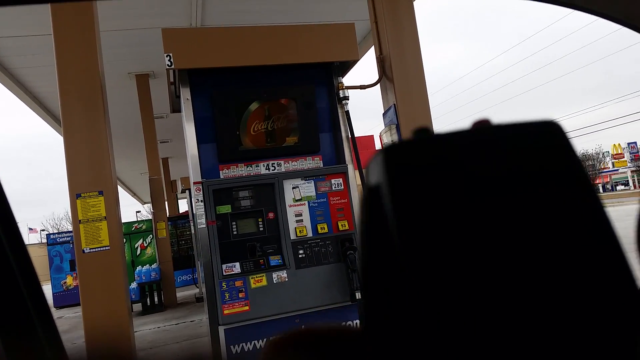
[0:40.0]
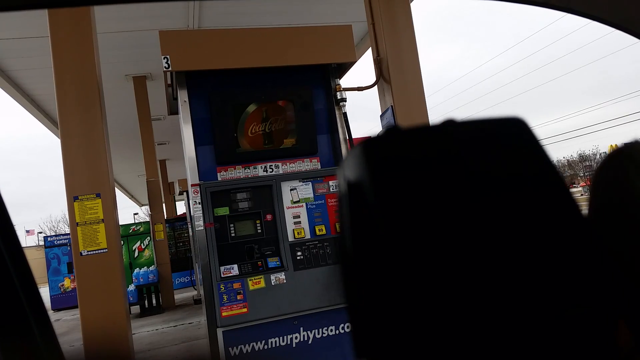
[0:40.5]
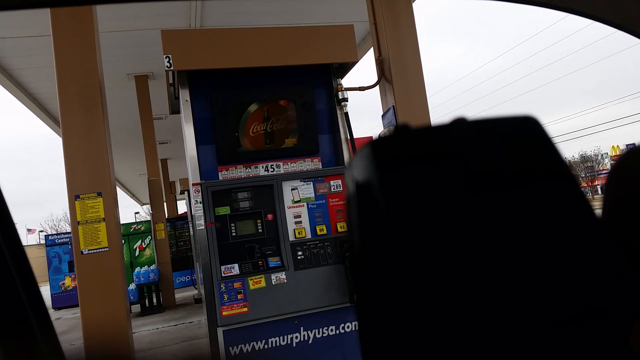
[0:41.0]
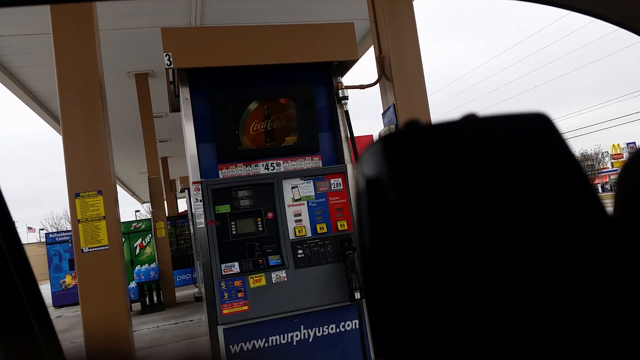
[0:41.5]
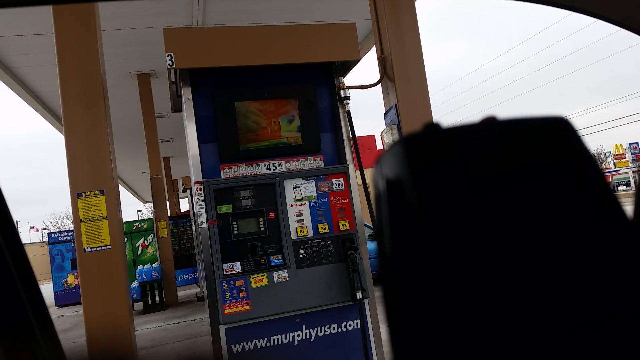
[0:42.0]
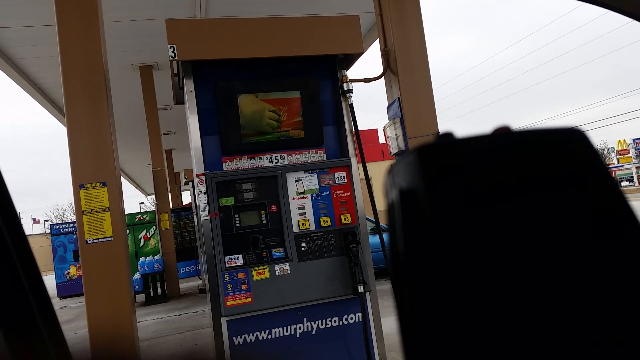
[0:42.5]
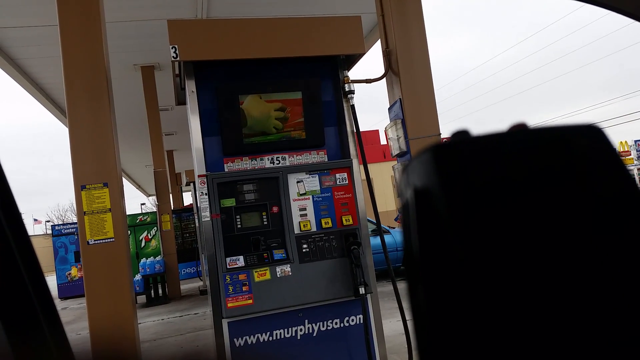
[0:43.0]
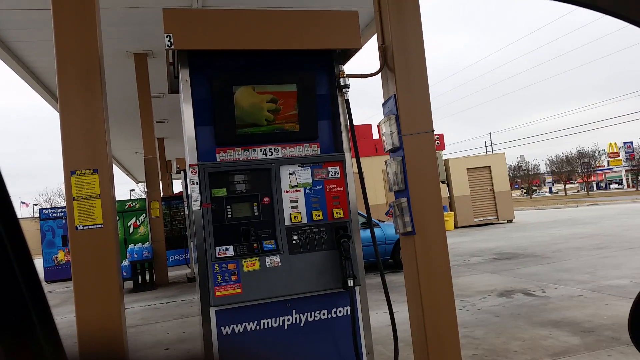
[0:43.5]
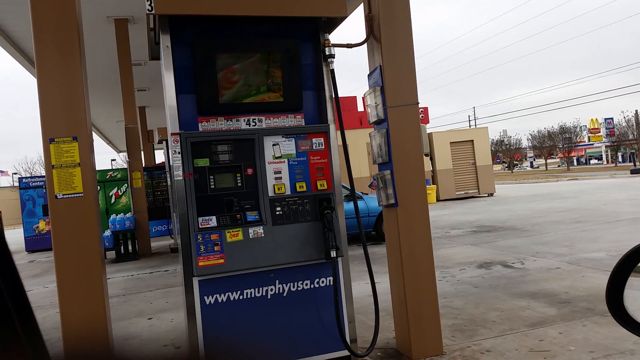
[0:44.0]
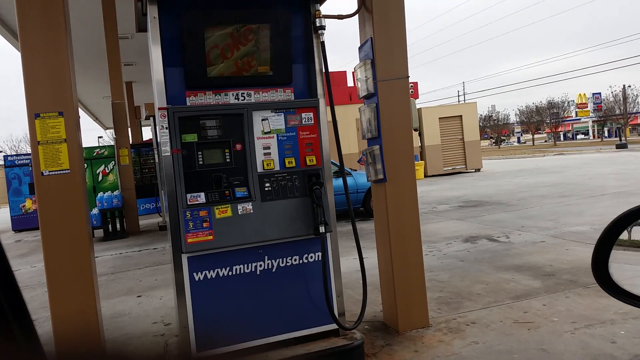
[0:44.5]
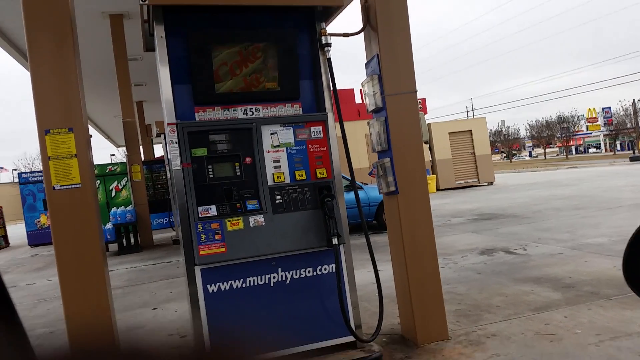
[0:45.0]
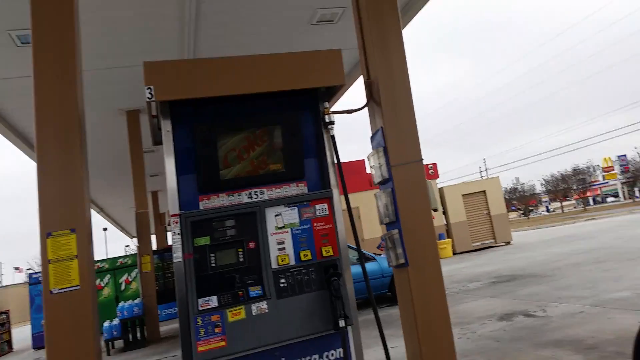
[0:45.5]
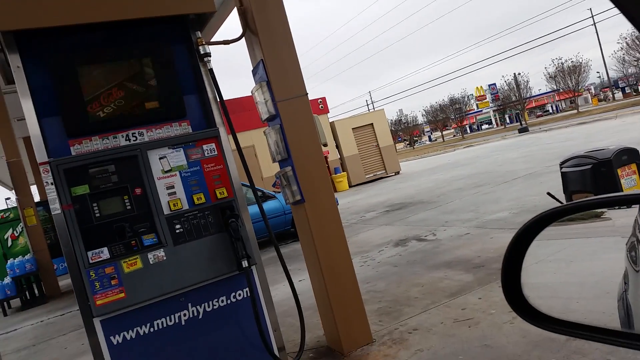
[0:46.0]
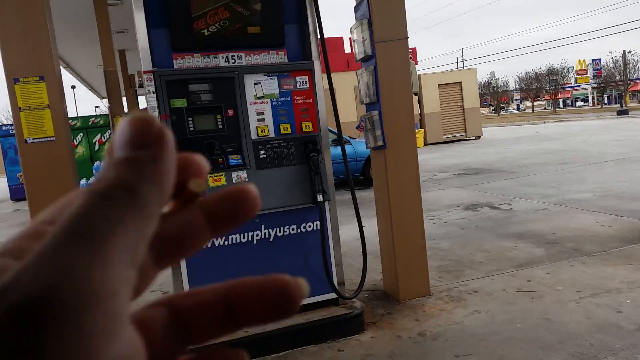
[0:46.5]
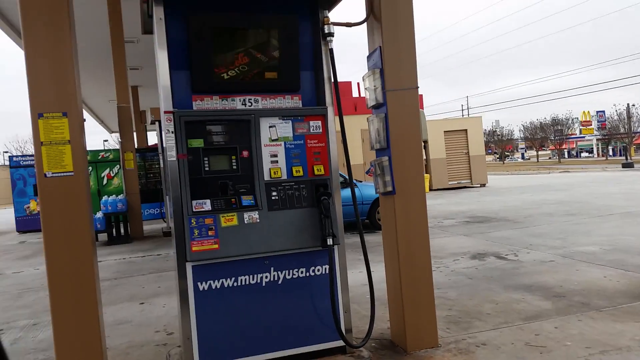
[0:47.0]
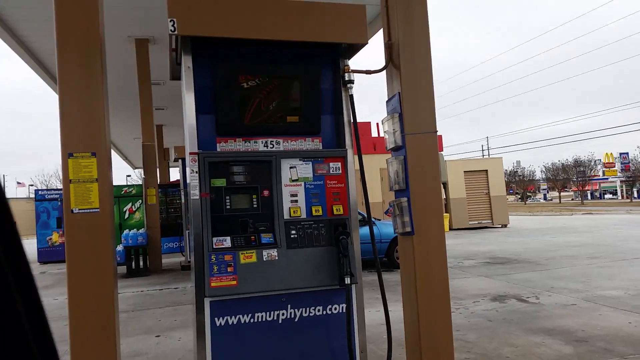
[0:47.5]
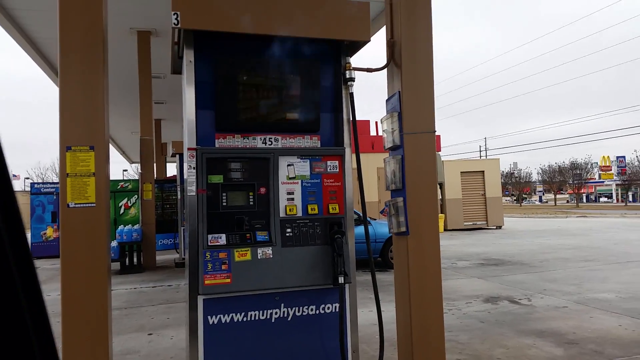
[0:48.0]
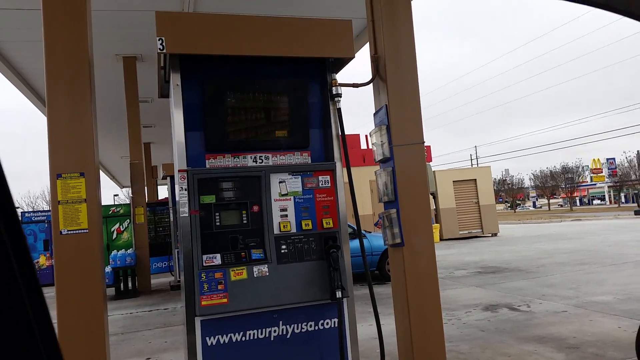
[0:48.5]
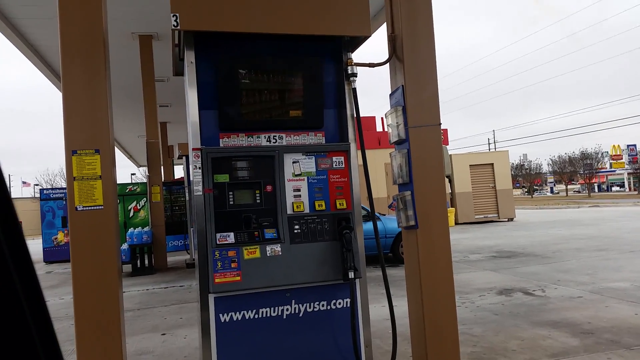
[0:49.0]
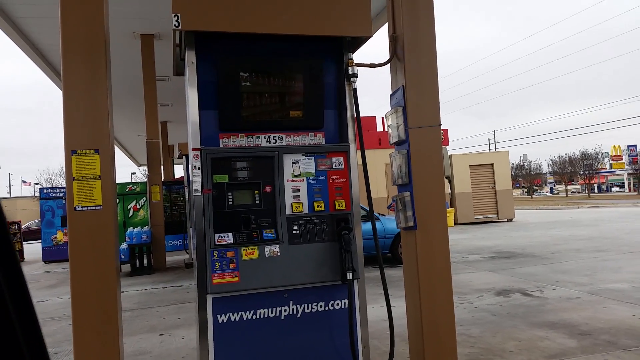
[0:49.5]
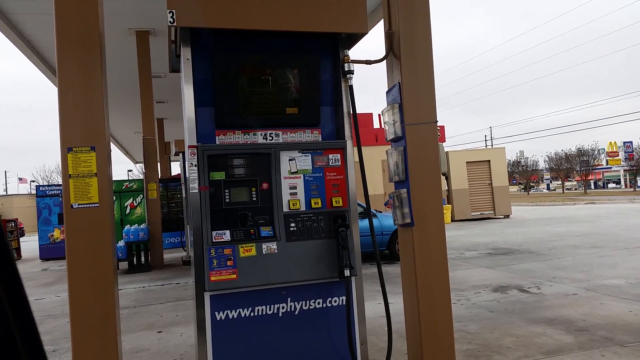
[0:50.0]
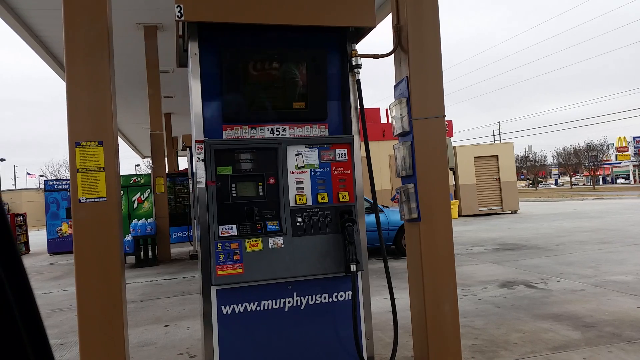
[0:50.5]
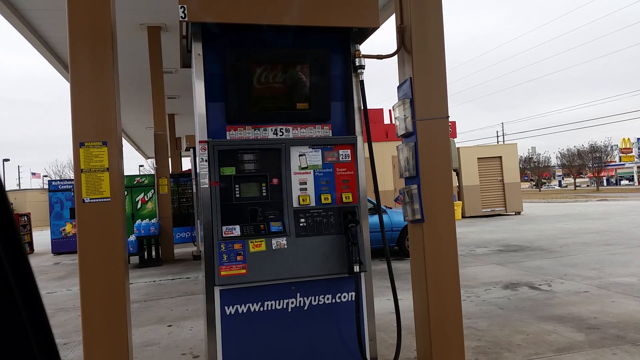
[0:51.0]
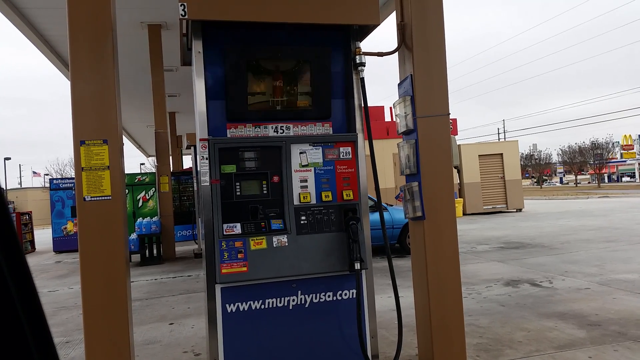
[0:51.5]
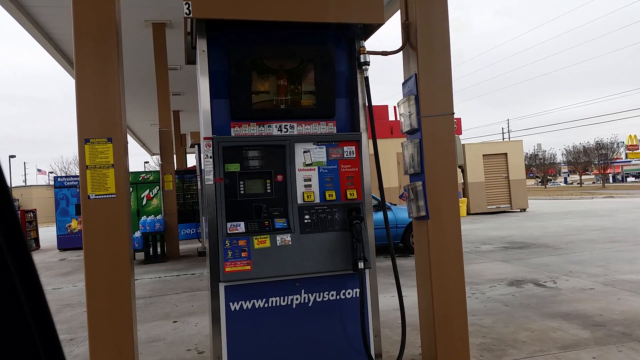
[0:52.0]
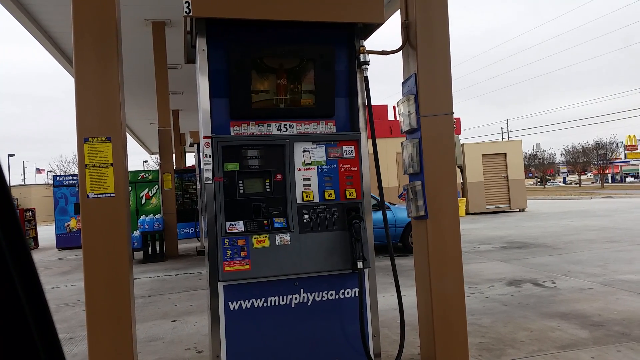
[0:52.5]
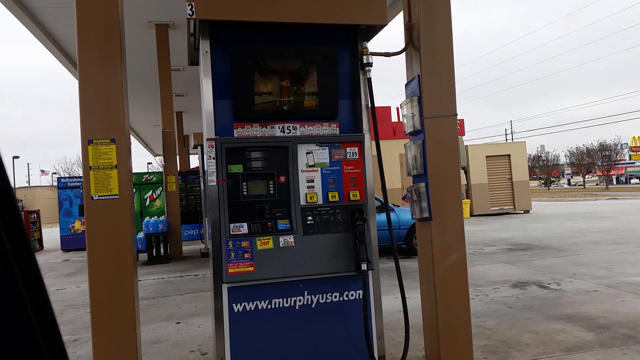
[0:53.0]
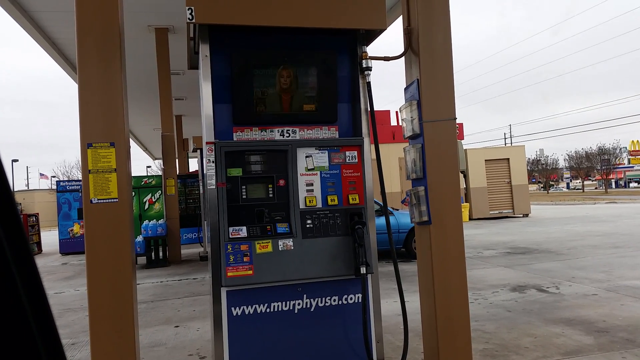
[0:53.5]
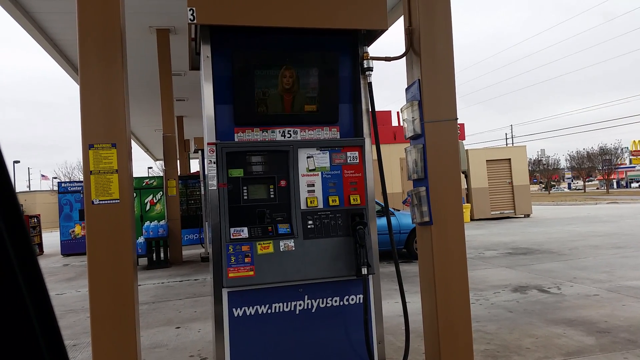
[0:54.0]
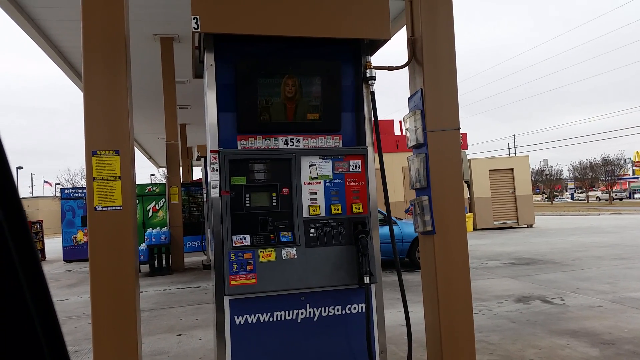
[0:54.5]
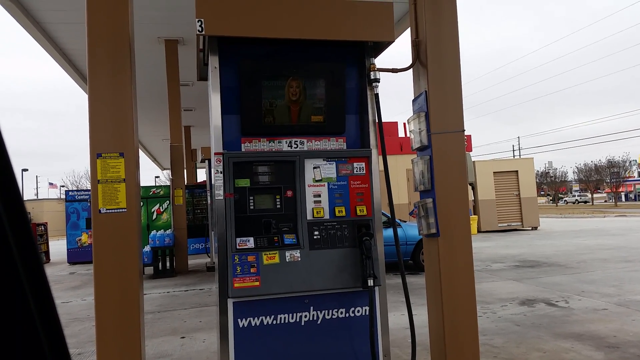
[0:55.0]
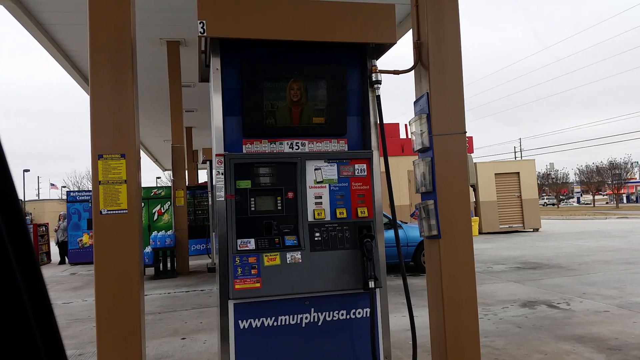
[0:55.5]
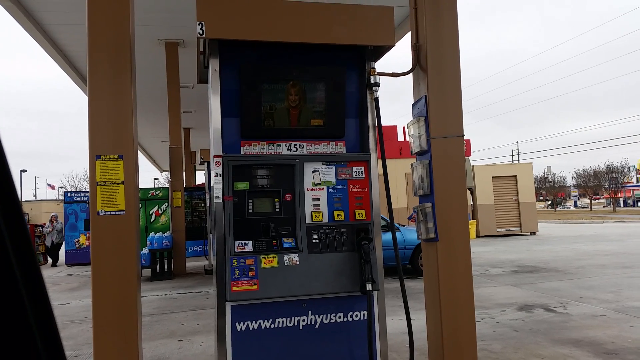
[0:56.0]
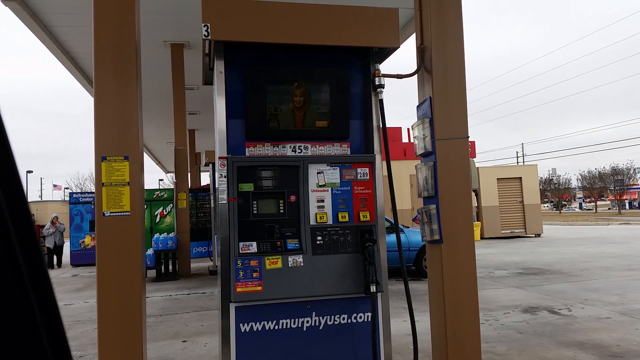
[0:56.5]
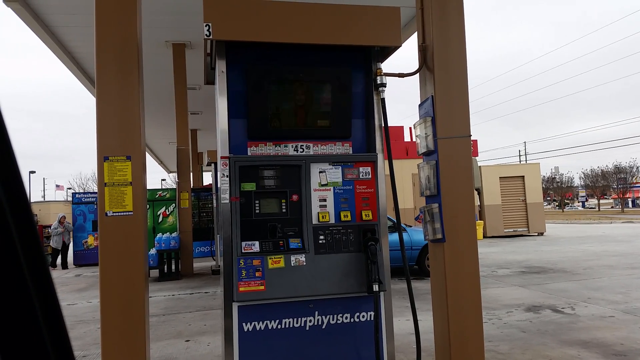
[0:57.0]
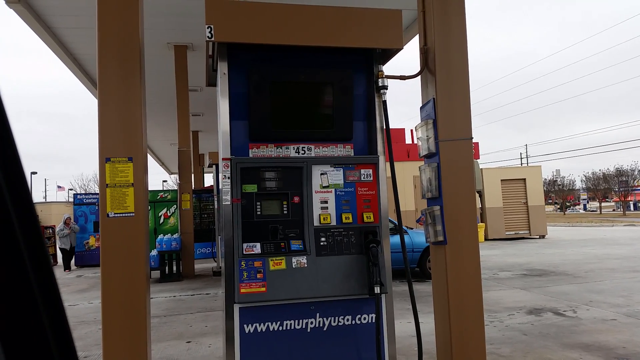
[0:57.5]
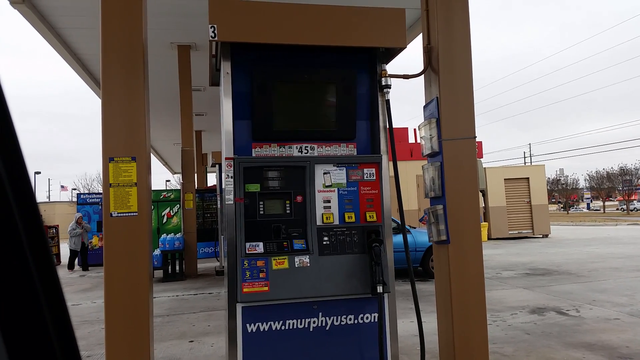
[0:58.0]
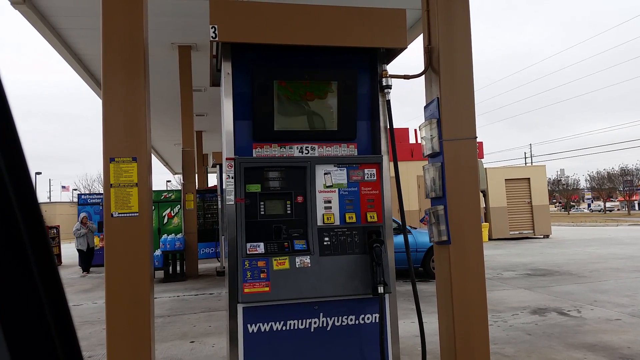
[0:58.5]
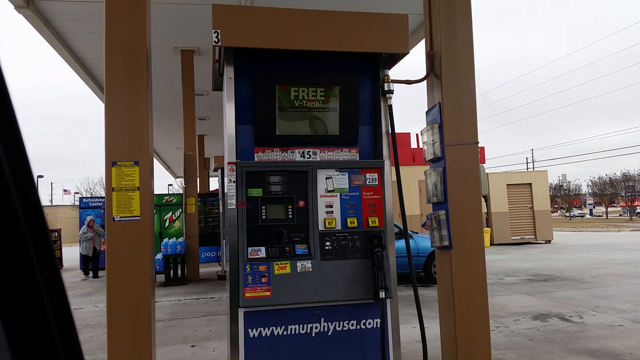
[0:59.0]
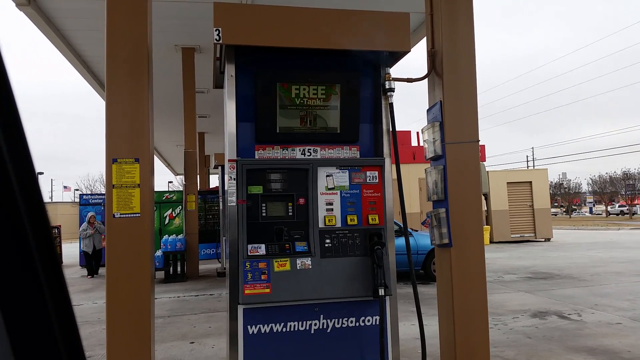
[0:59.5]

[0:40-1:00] The person presses the nodule on the device again, and what looks like a Coca-Cola ad appears on the screen, followed by the news program. They keep filming the device in their hand, now holding it and apparently gesturing toward the screen. At the next pump over, the black vehicle is gone. The person who got out of the blue vehicle appears to come from behind some sort of vending machine, comes around, apparently talking on their phone, and seems to be heading back to their vehicle.